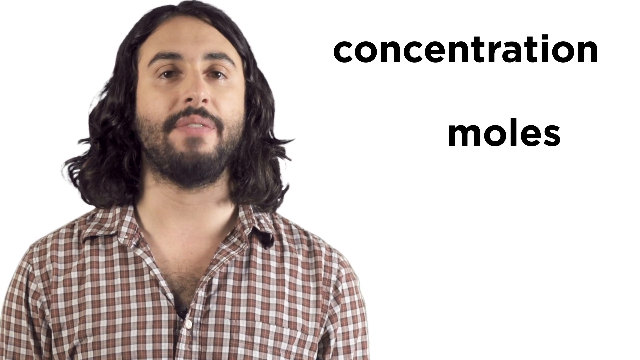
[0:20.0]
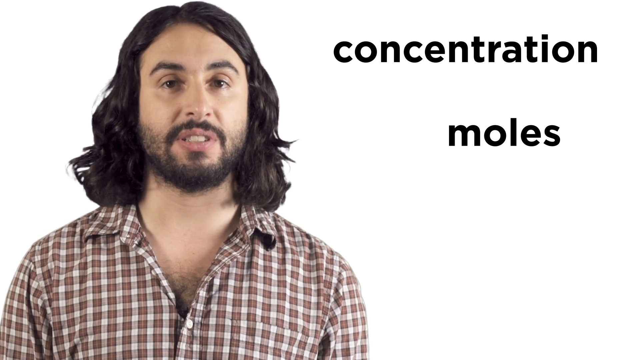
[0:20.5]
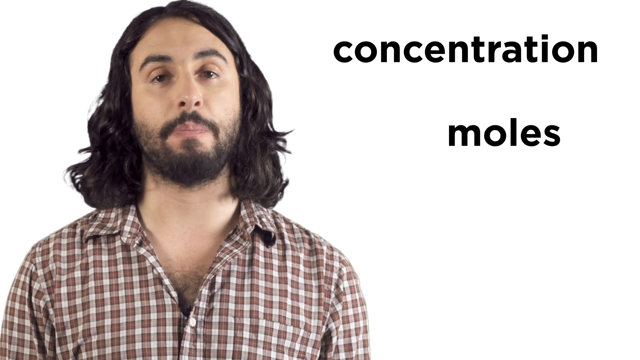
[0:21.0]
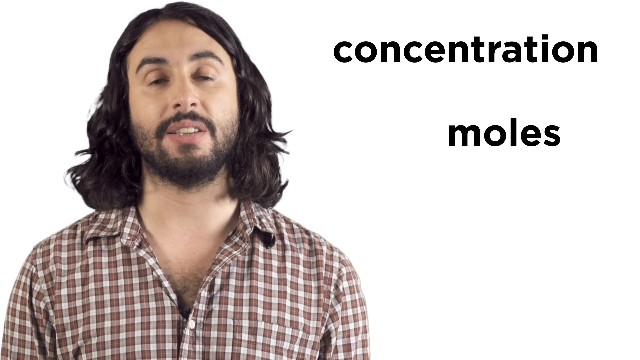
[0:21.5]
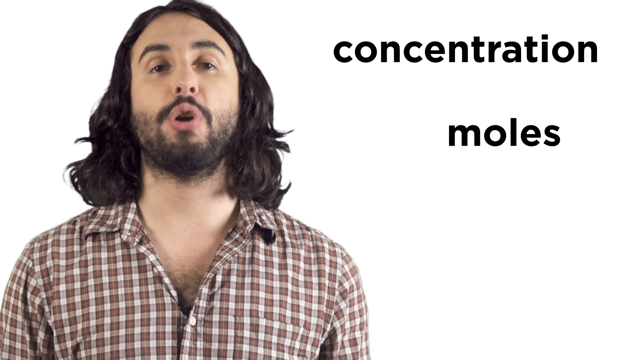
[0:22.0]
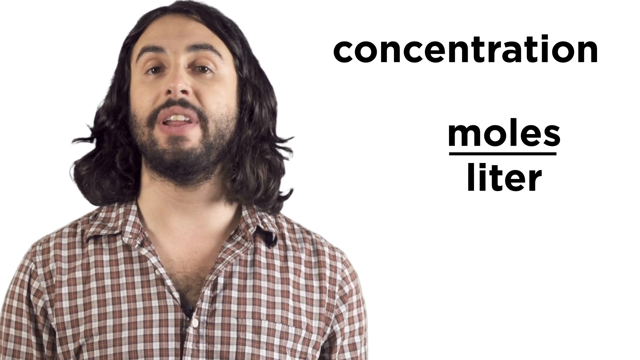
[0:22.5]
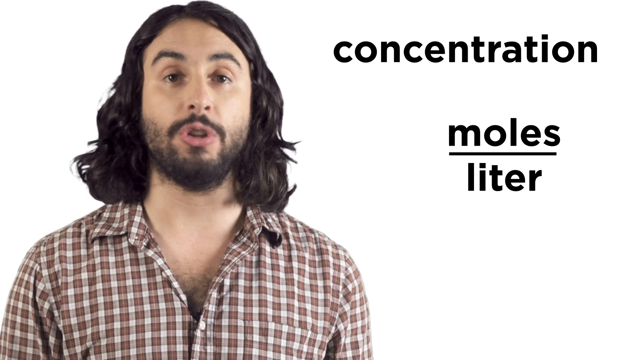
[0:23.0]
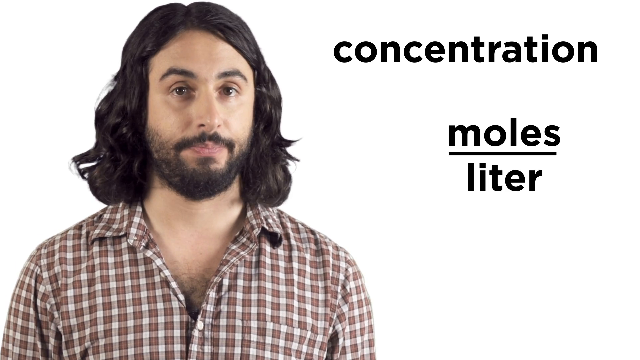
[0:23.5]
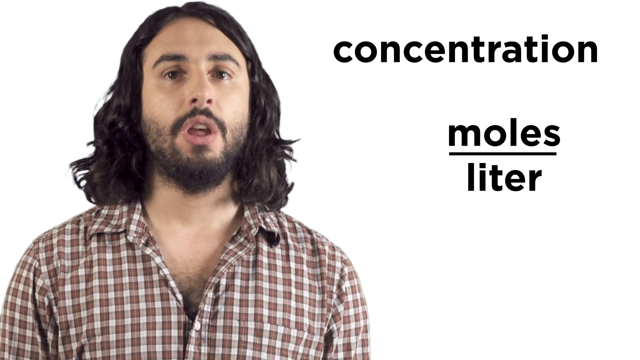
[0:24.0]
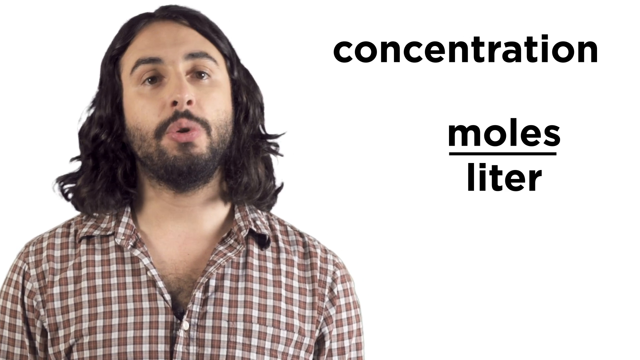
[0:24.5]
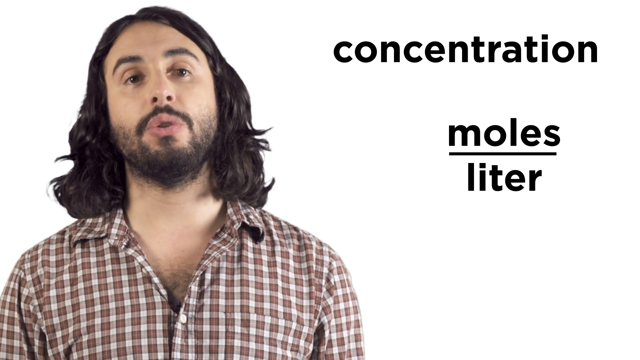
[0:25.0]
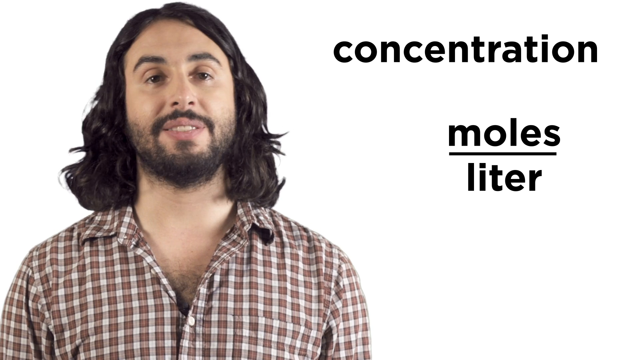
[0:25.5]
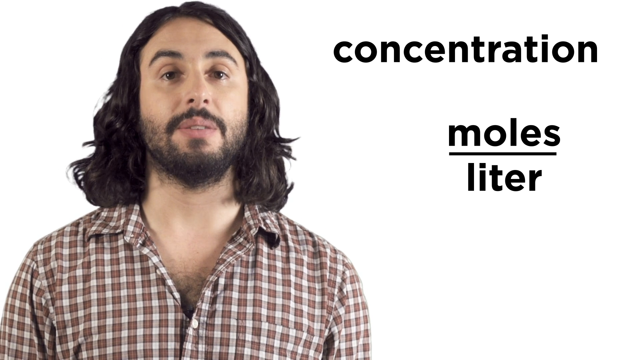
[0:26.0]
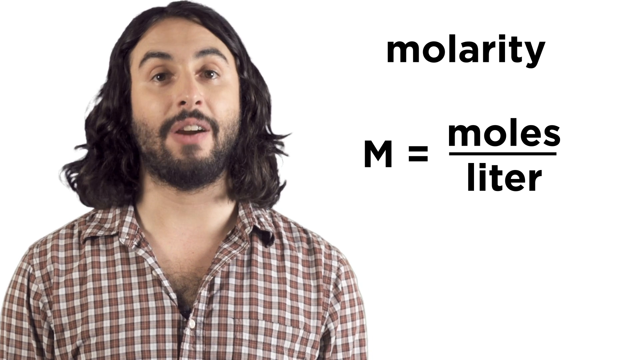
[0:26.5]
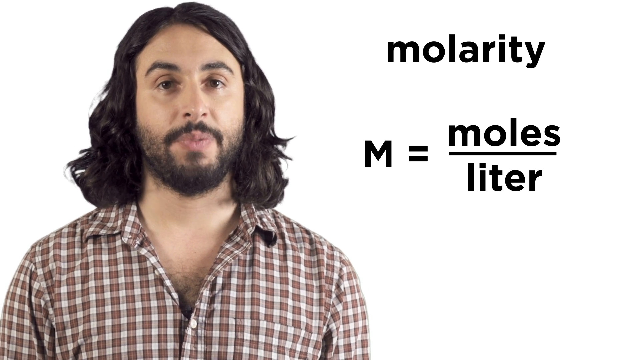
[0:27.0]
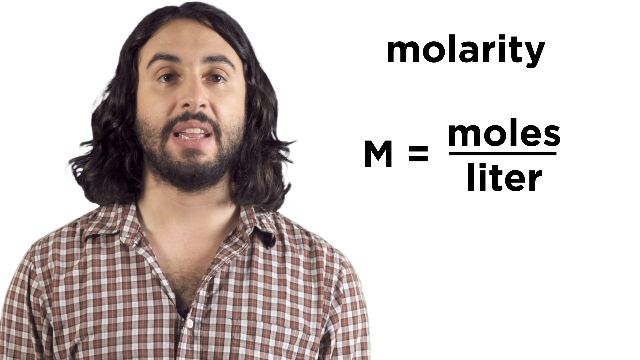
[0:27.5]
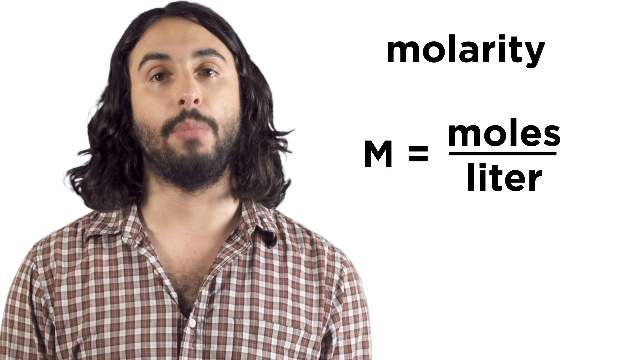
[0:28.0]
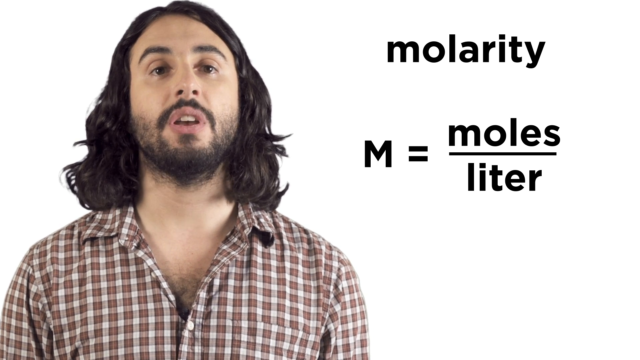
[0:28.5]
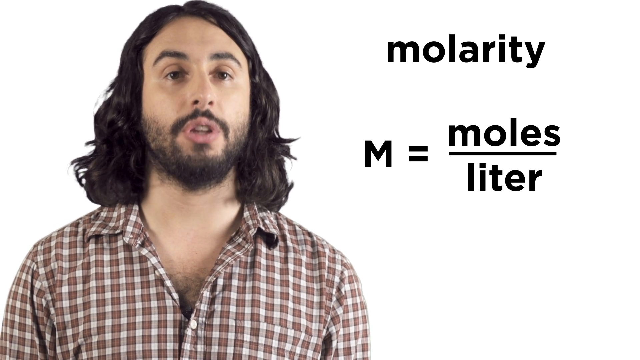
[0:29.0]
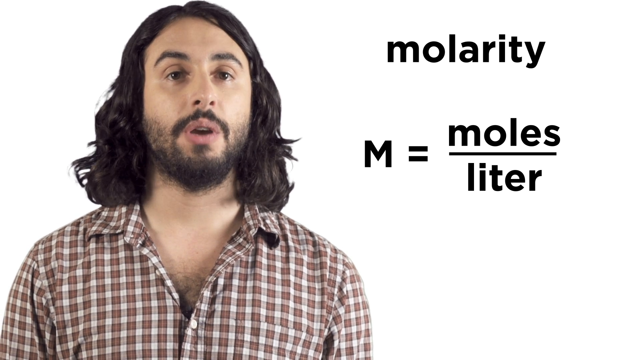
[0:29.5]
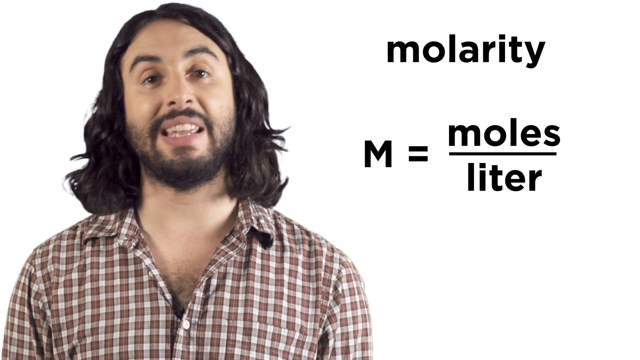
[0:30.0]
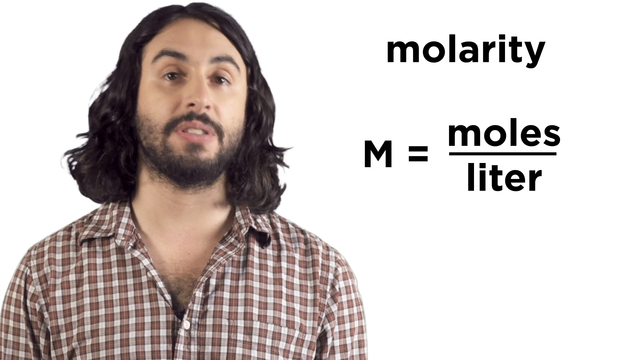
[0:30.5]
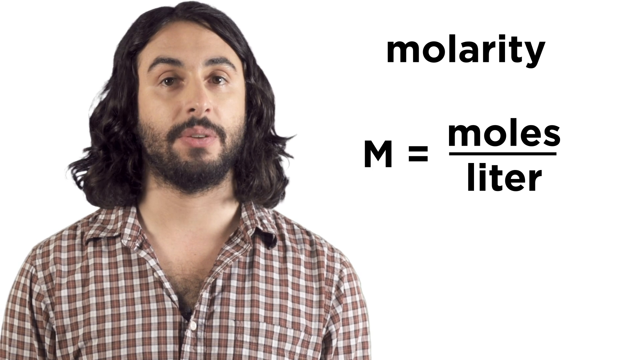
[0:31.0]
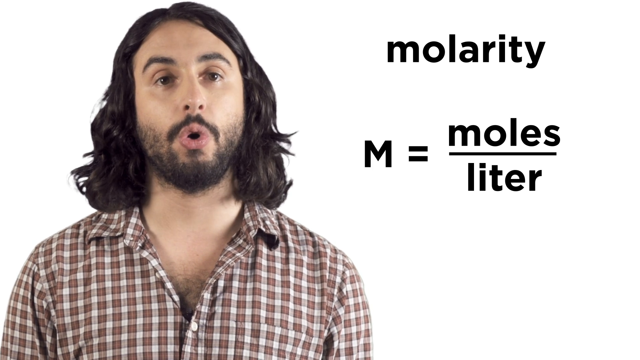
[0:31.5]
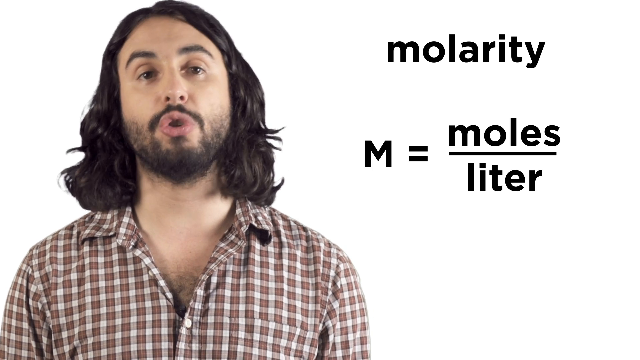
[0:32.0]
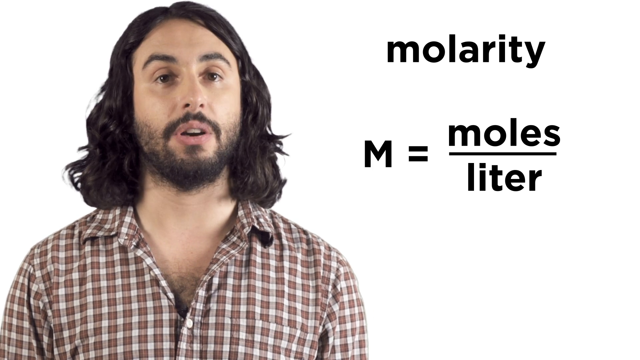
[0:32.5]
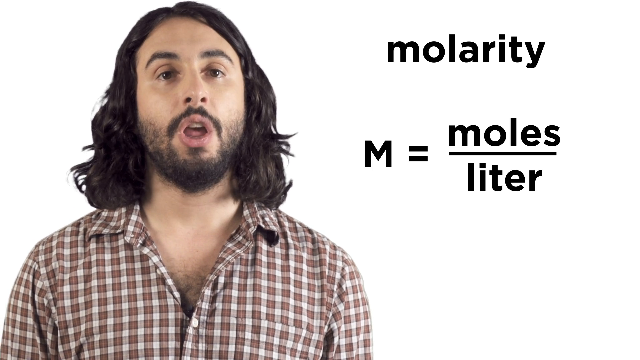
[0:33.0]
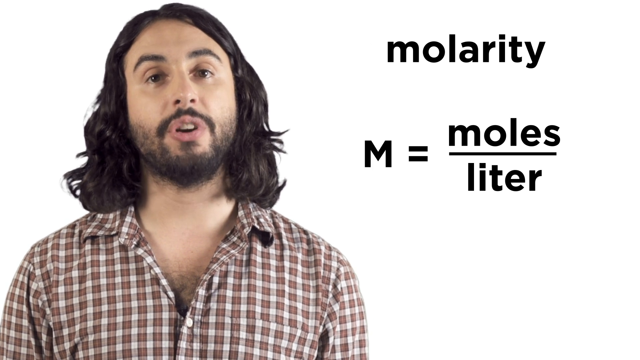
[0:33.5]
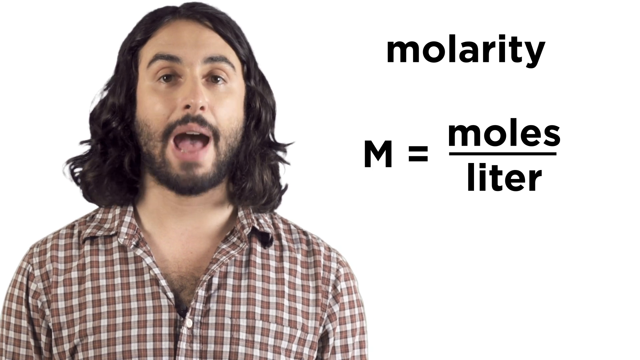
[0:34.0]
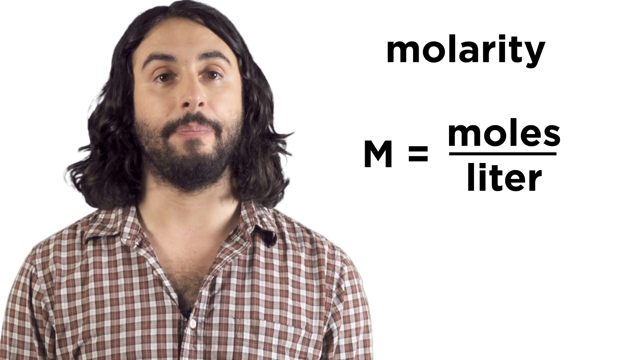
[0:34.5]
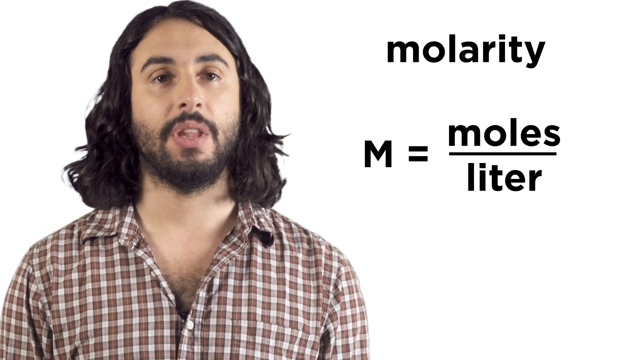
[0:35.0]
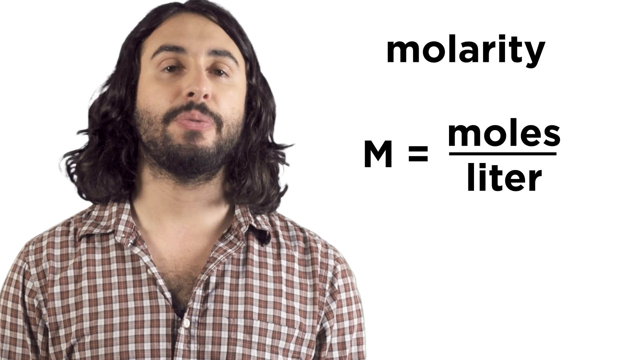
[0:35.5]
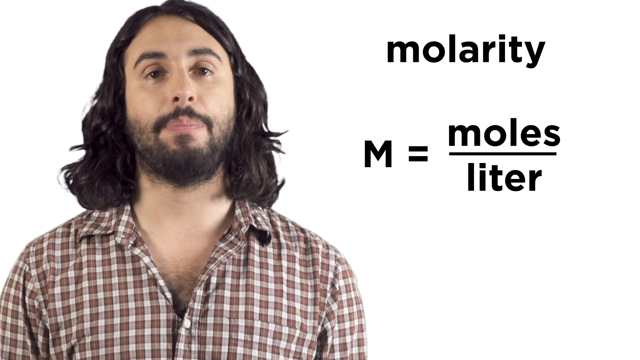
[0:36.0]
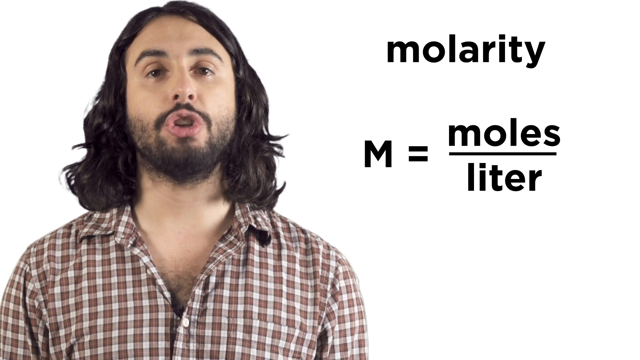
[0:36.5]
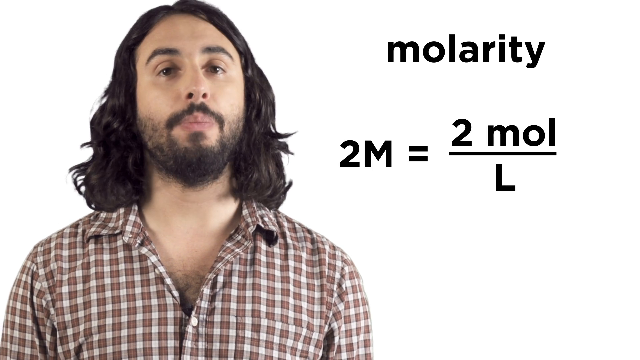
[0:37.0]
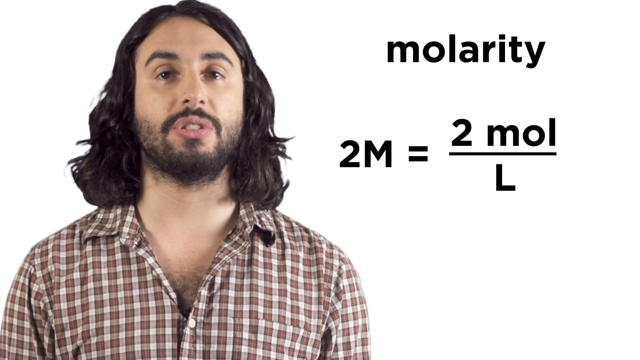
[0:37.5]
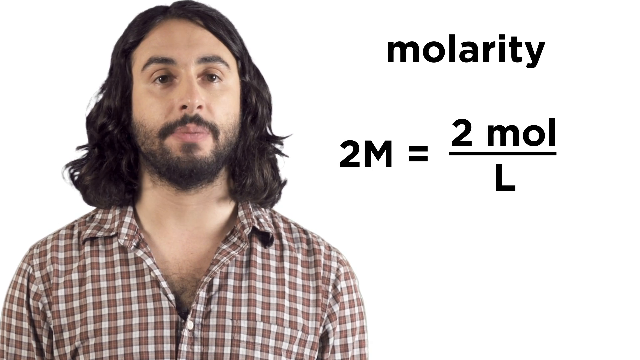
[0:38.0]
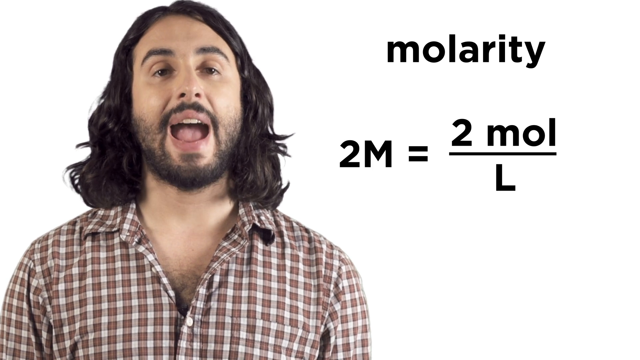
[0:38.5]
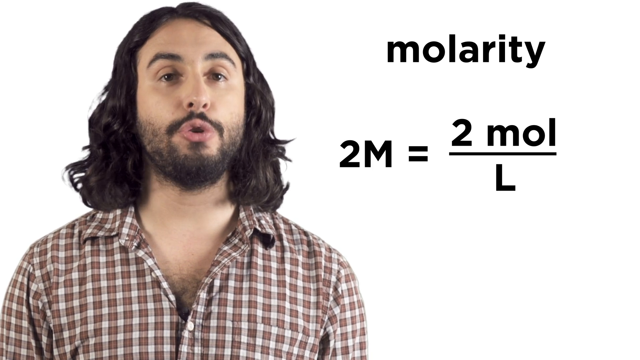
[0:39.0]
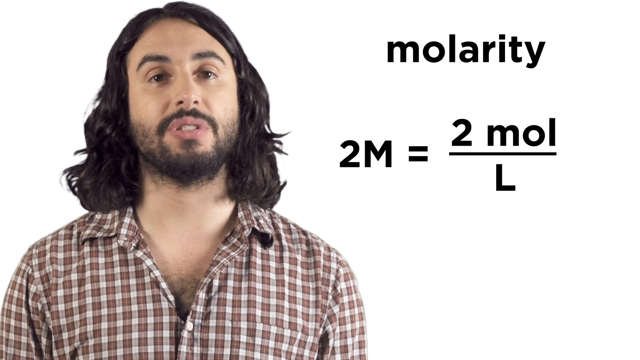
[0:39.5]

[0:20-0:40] A man on the left side of the screen wears a white and brown plaid shirt; he has long black hair and a black beard and looks to be in his 30s. He is seen from the chest up in front of a white background. In the top right of the background is the word "concentration" in black, with the word "moles" in black below it. The man looks at the camera and talks. A black underline appears under "moles", and the word "liter" appears in black below the line. The word "concentration" then disappears and "molarity" appears in black, with the equation "M = moles/liter" beneath it, using a capital M. The man keeps talking while looking at the camera, slightly shaking his head left and right. The equation then changes to "M = 2 mol/L", with a capital L, and he continues to talk.